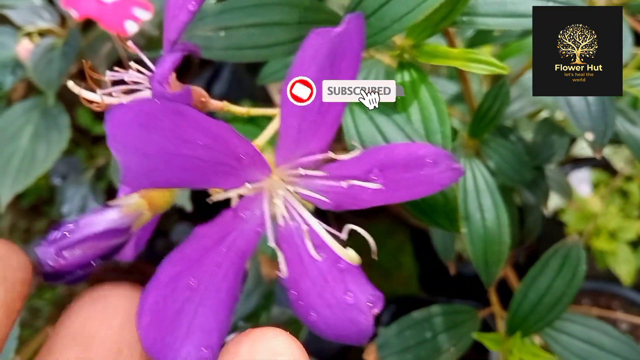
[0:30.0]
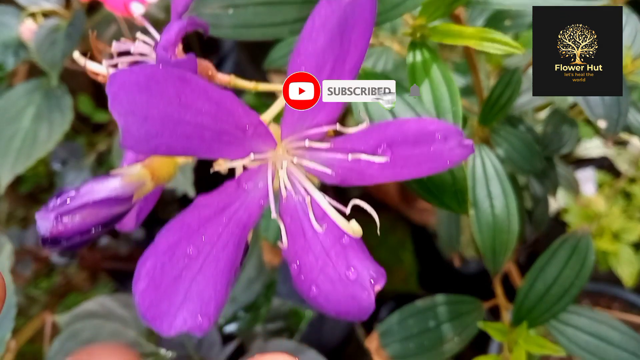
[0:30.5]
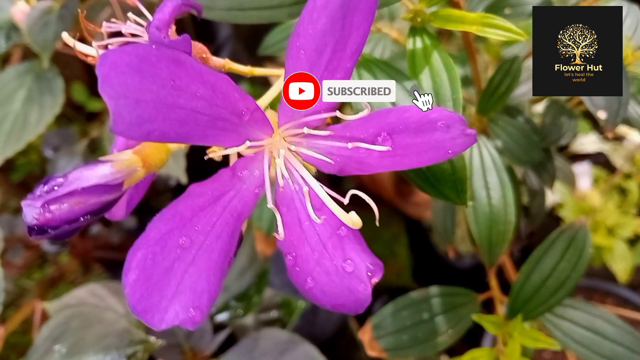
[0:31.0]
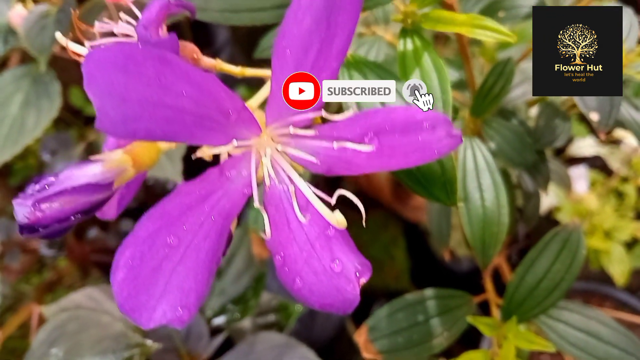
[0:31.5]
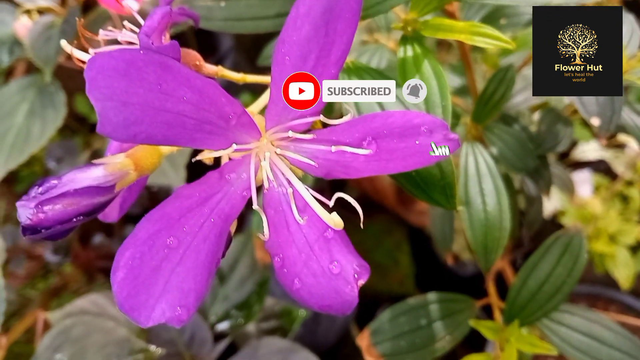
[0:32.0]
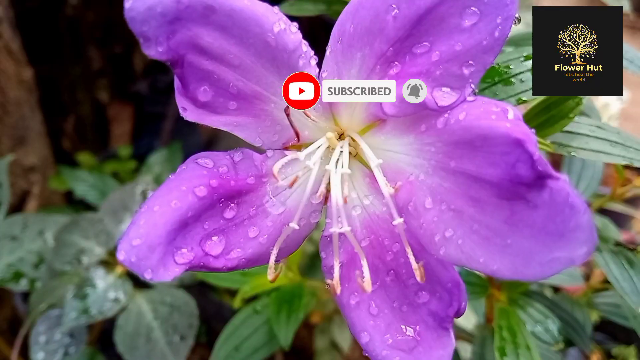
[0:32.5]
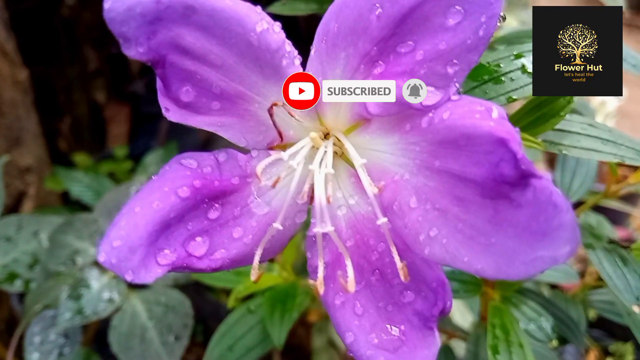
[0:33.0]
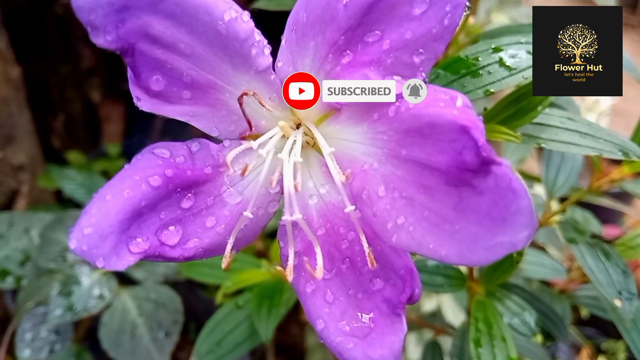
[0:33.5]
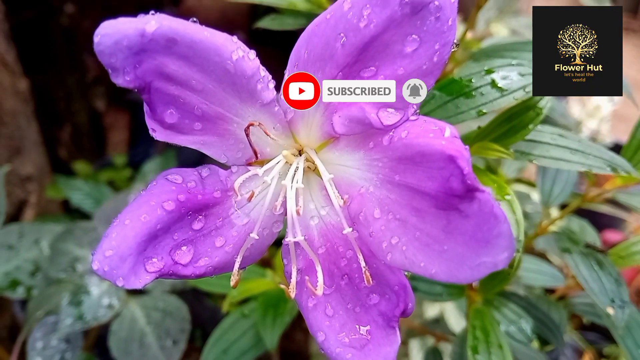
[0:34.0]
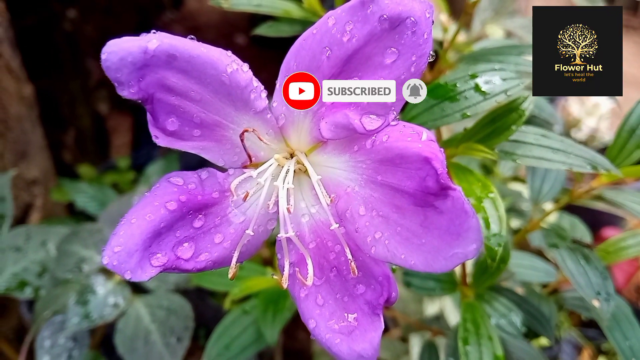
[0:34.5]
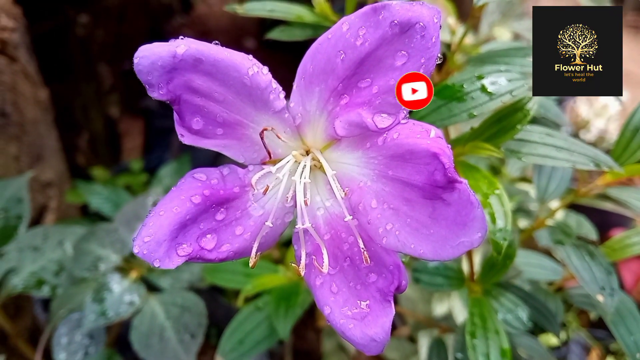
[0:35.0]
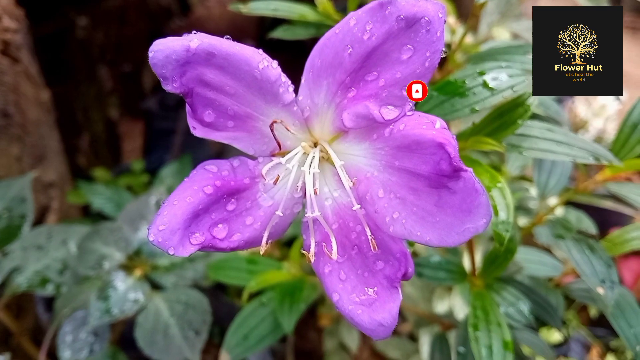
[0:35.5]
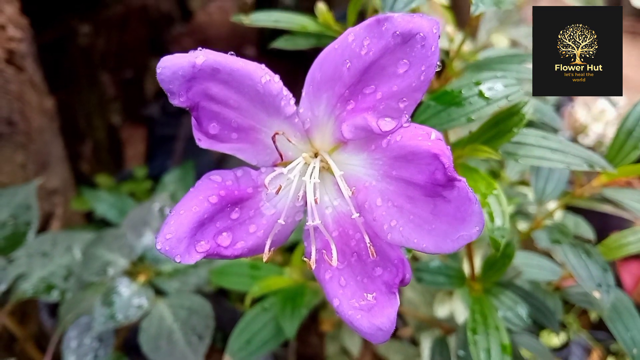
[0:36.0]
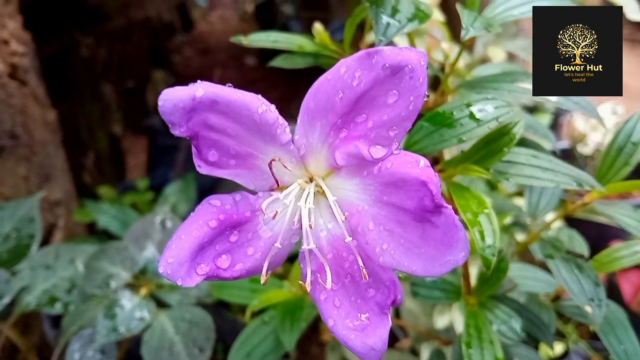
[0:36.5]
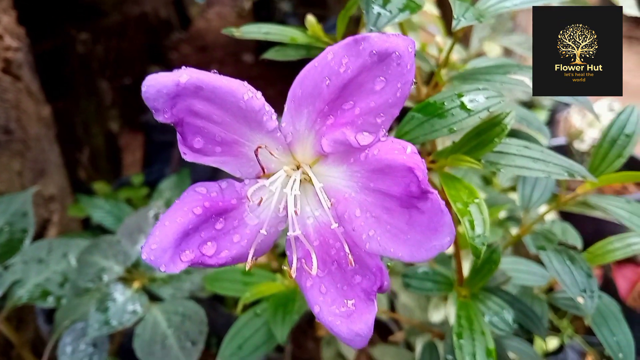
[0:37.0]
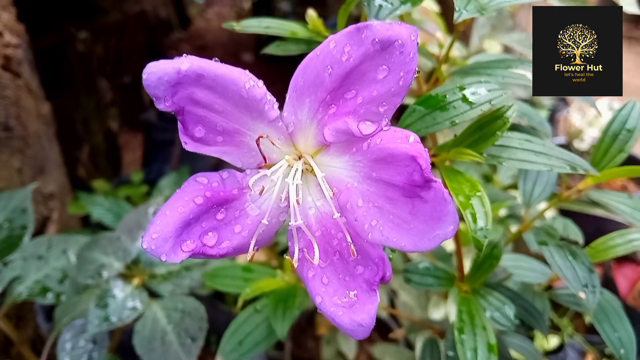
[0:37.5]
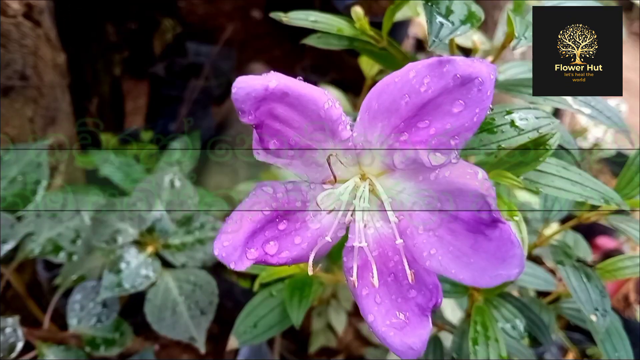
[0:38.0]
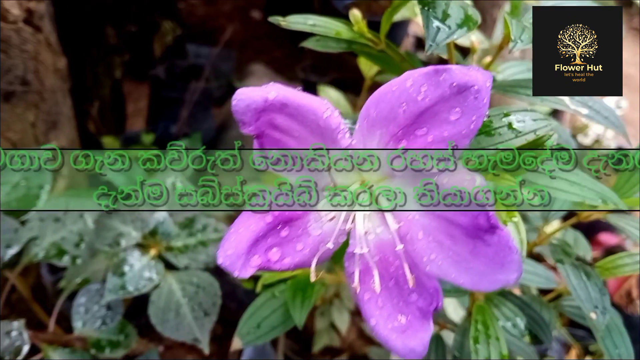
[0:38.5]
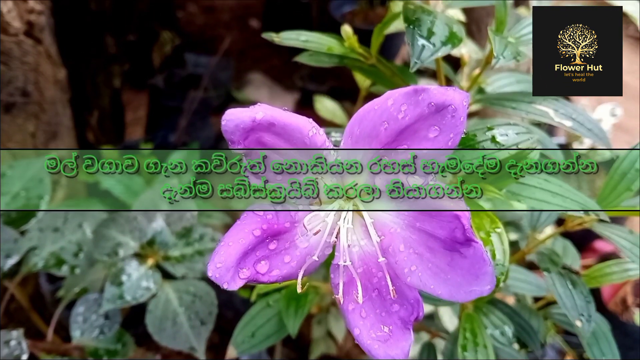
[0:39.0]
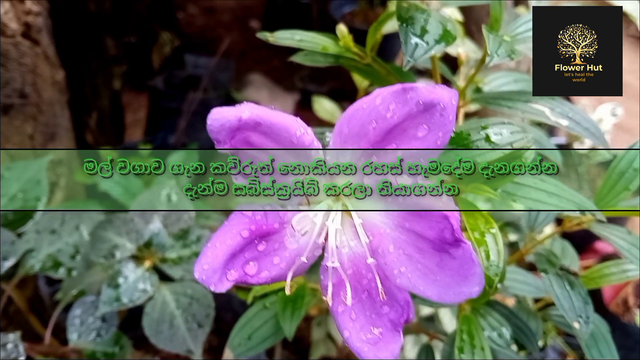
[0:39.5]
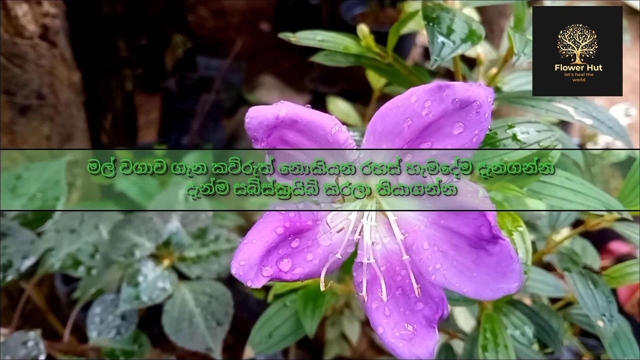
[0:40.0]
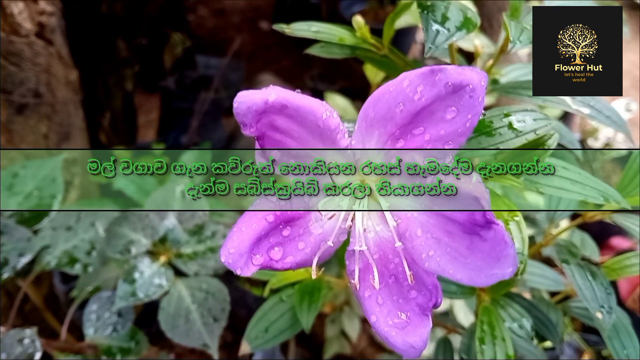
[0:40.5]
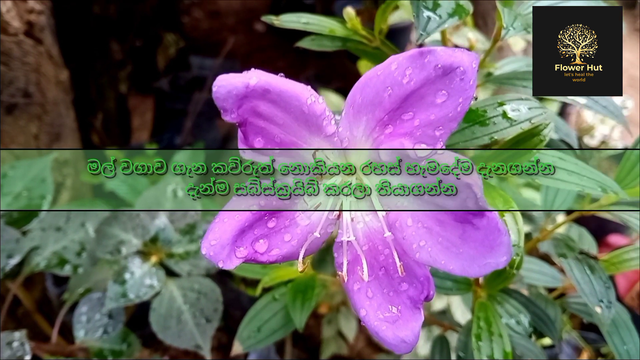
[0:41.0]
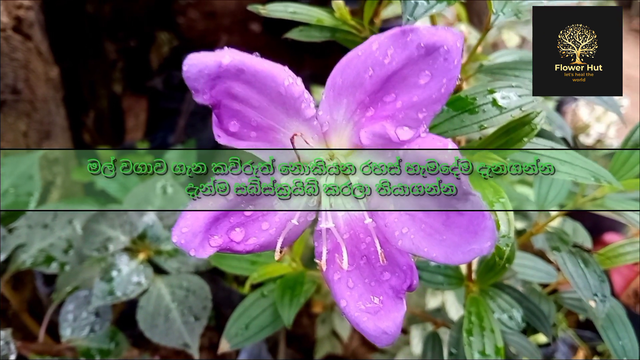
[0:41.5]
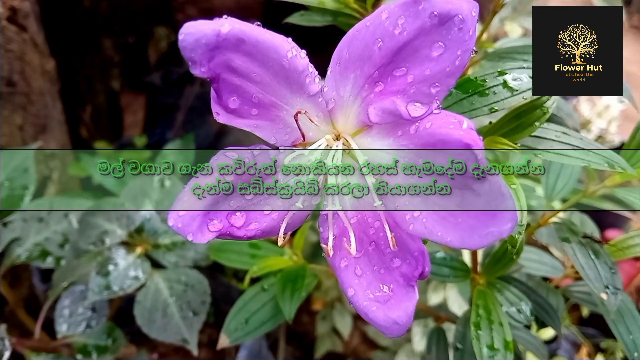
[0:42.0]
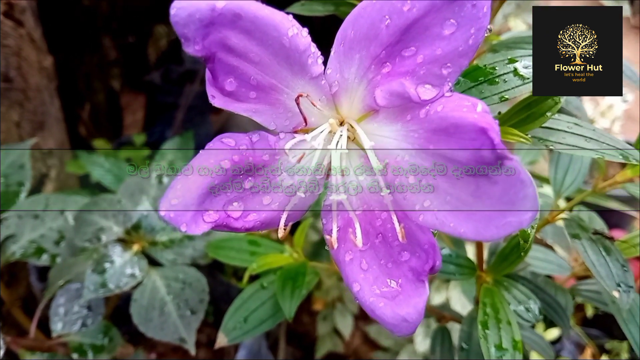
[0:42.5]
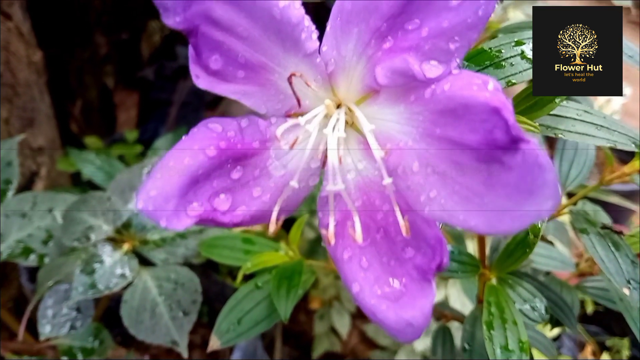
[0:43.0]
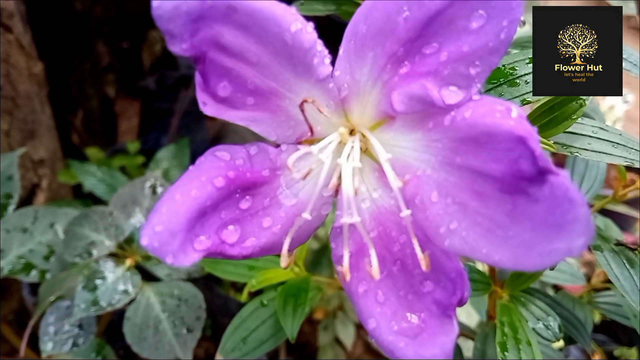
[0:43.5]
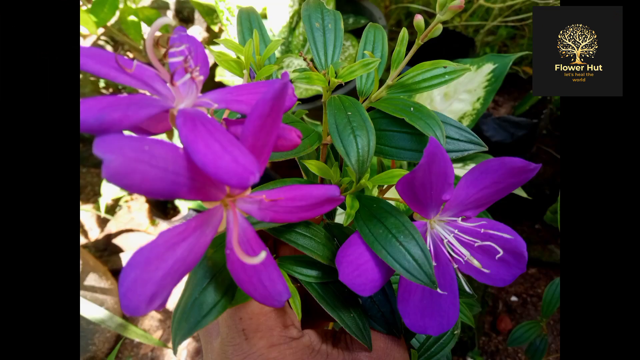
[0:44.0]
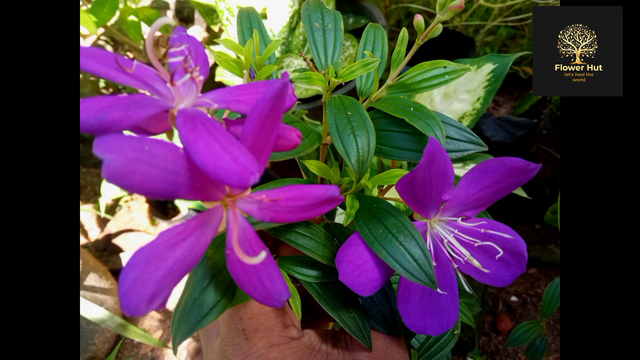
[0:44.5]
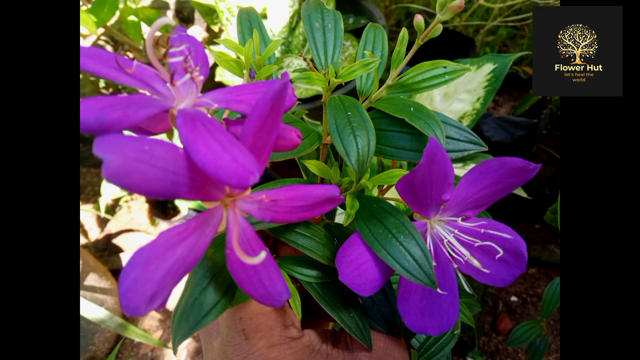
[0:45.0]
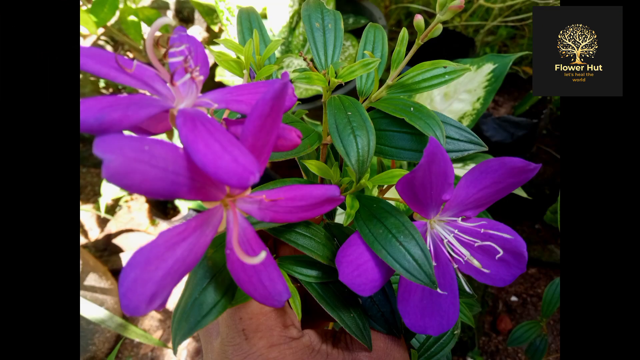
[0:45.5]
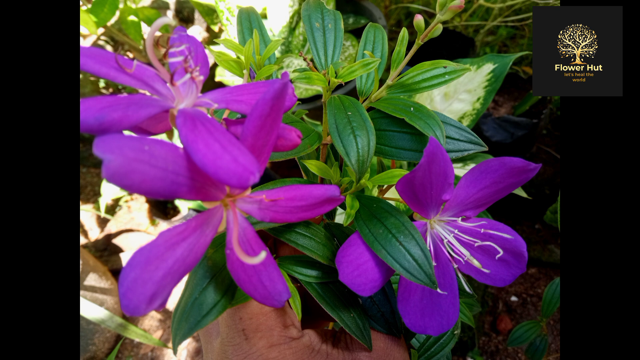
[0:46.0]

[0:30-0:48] The focus shifts to a more mature flower, whose center is white and whose purple color is starting to fade. Text appears on the screen in a script that looks like a Dravidian language; it seems similar to Kannada but is not Kannada, Telugu, Malayalam or Tamil. At the end of the video there is a still shot of the flowers and the plant, along with text on the screen encouraging the viewer to subscribe.